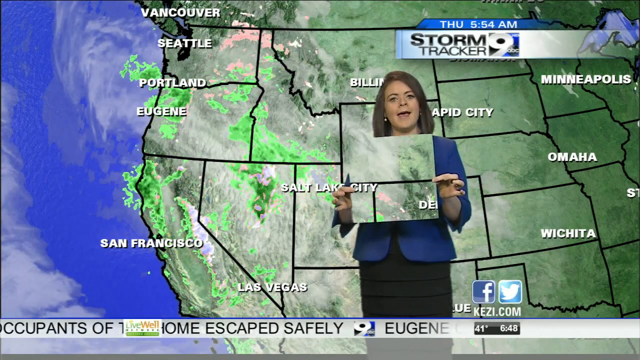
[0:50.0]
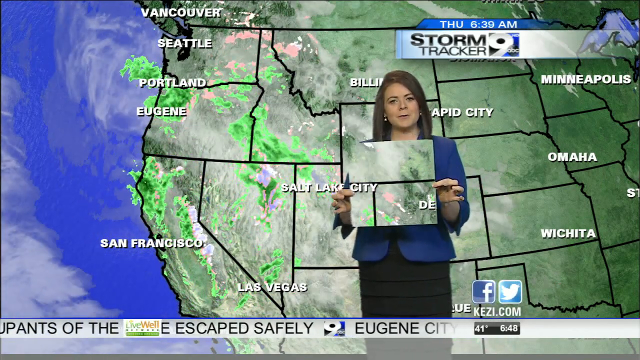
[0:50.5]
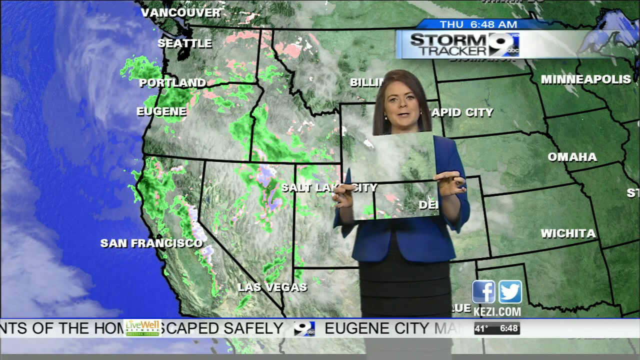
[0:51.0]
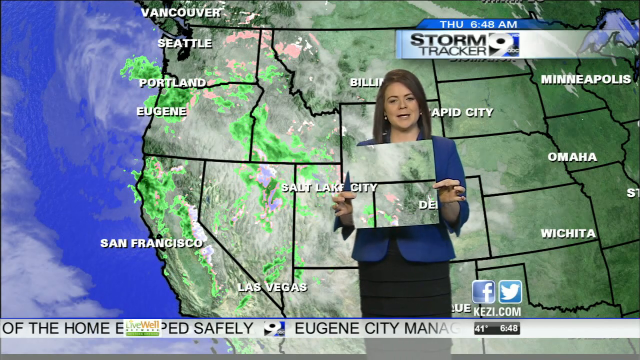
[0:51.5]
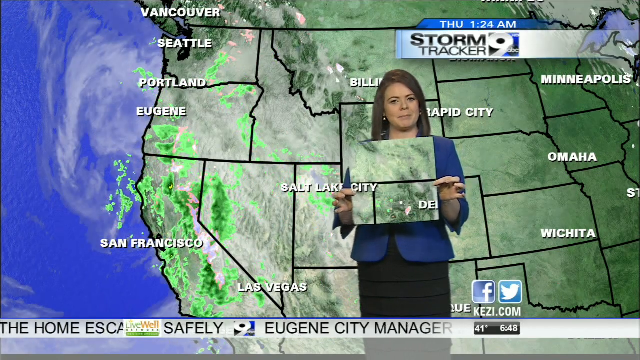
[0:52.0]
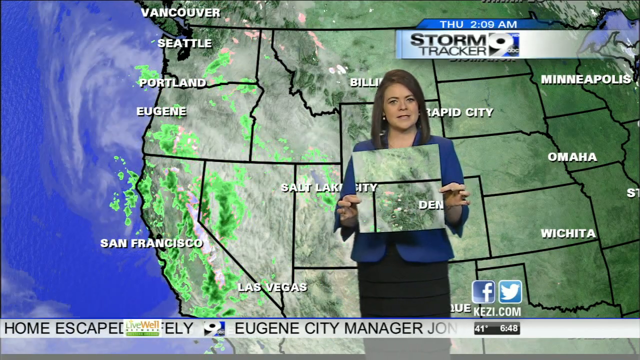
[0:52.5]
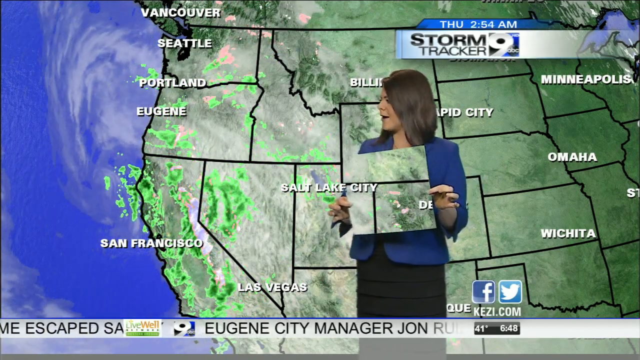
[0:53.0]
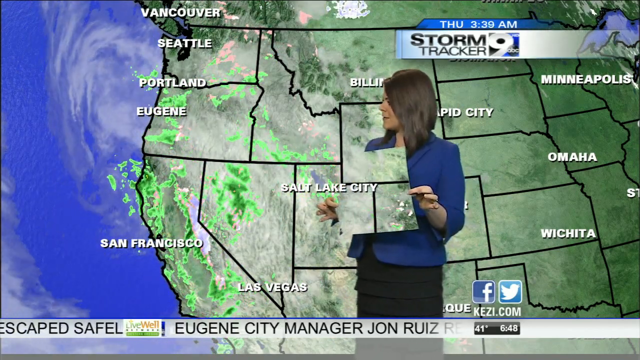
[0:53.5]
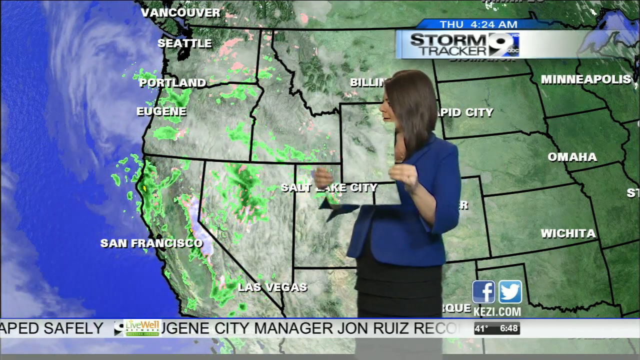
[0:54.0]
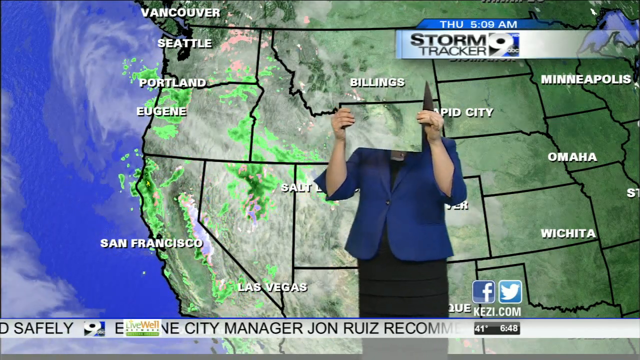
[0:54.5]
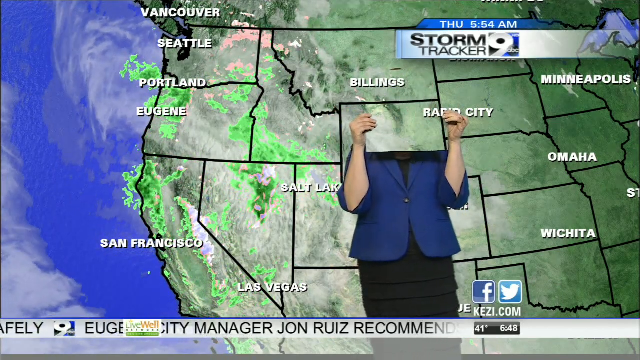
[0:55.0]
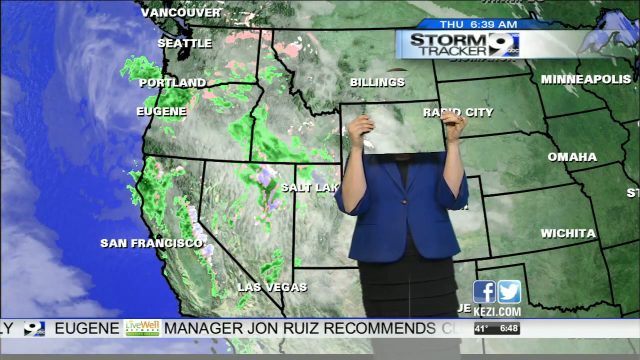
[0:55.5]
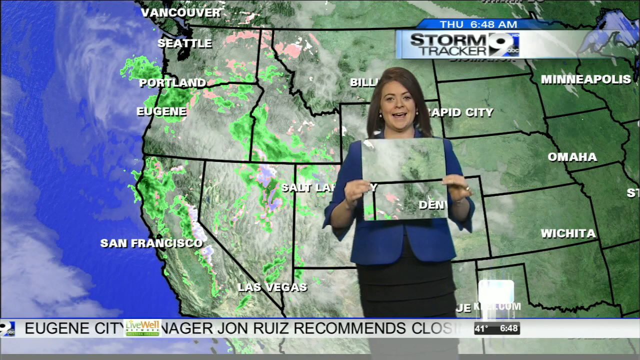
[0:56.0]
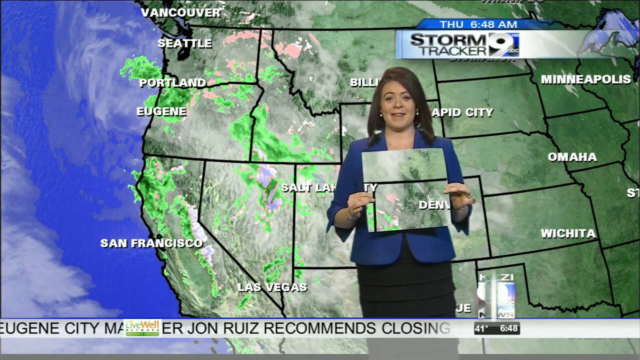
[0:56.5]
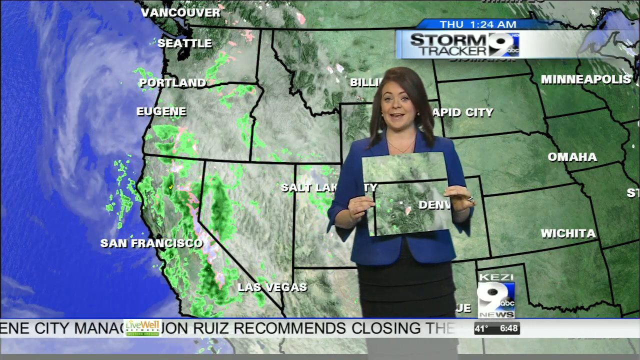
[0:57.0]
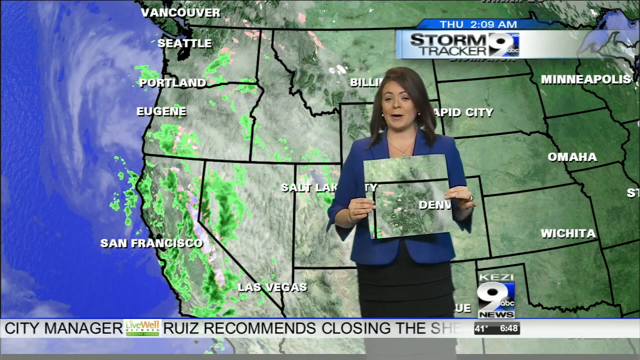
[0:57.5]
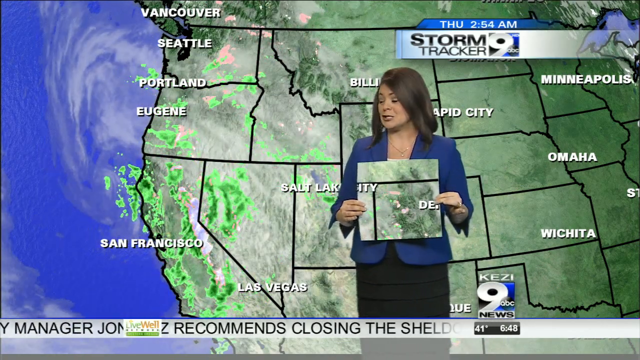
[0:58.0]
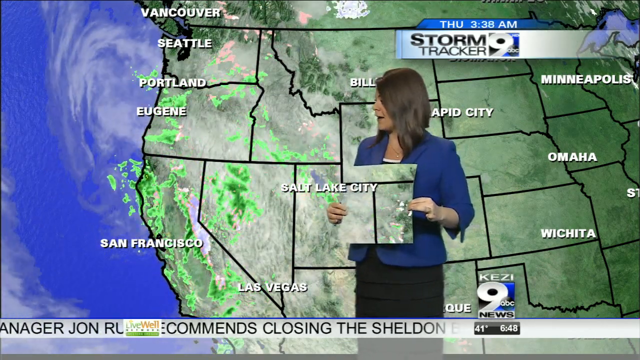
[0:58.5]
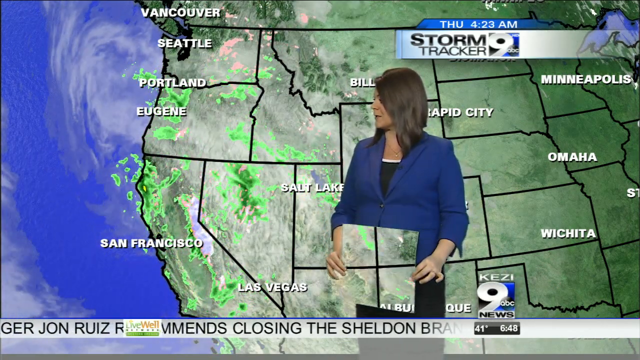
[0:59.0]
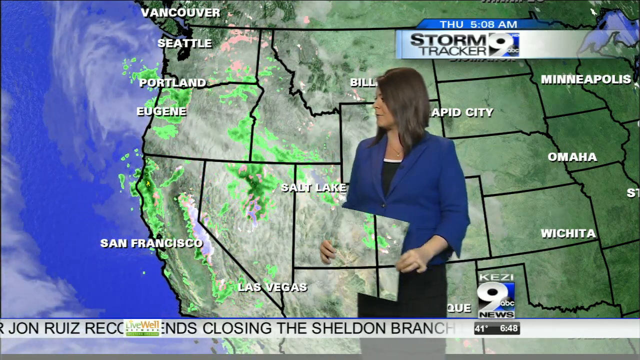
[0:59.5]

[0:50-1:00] A live weather report is under way in a news station. The station's logo, reading "9abcnews", appears in several places, in the upper right and lower right, and a scrolling news feed runs along the bottom. Behind the meteorologist is her map, green in color, with black outlines for the states and white names for the large cities featured. A storm is traveling across the California region, shown with white for clouds and green for rain and precipitation, with the coloring varying by intensity as it moves. The meteorologist is a young woman in a suit jacket with a black dress underneath and dark brown shoulder-length hair. She holds up a square of some type of material in front of her that interacts with the green screen, so wherever she holds it, the green-screen image shows in place of the square. In one motion she lifts it in front of her head, which blocks her head out completely so that only the map is visible.